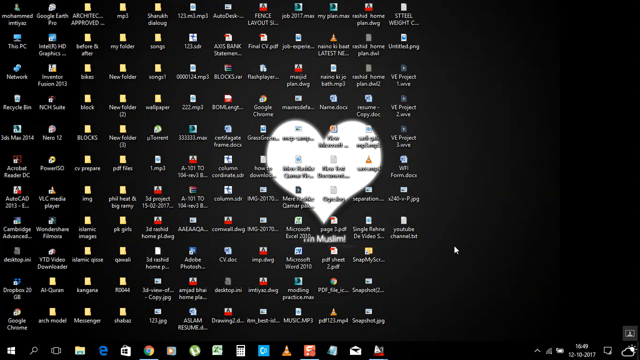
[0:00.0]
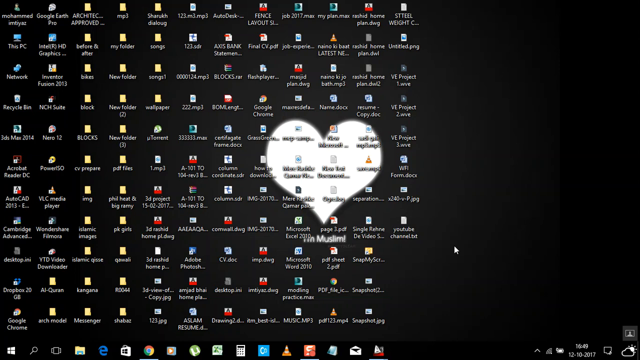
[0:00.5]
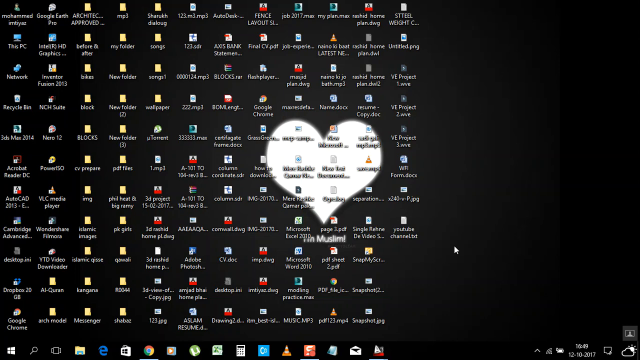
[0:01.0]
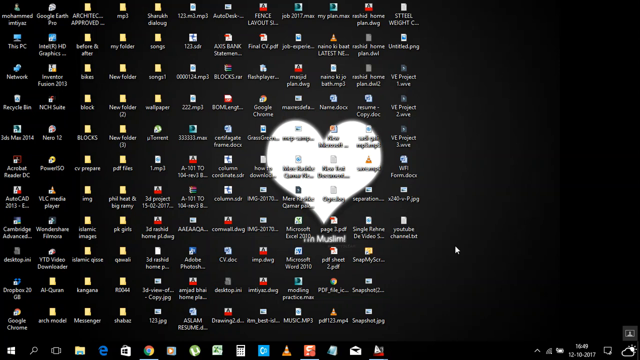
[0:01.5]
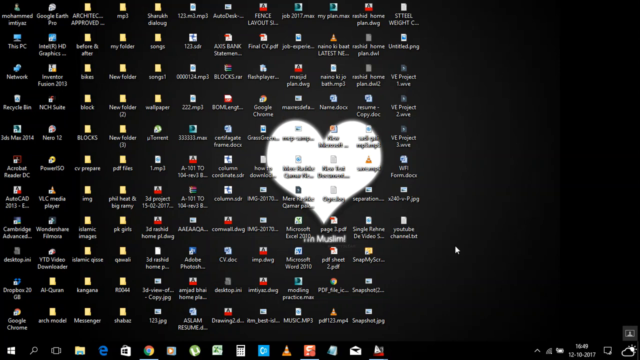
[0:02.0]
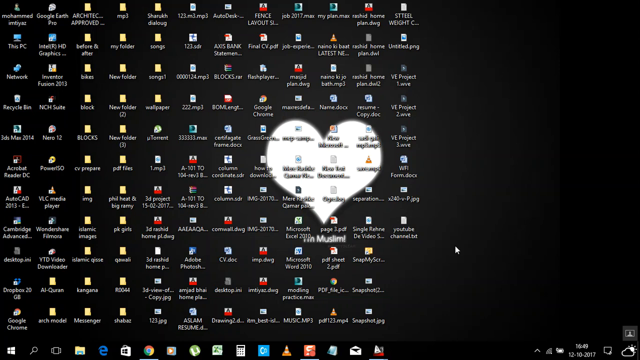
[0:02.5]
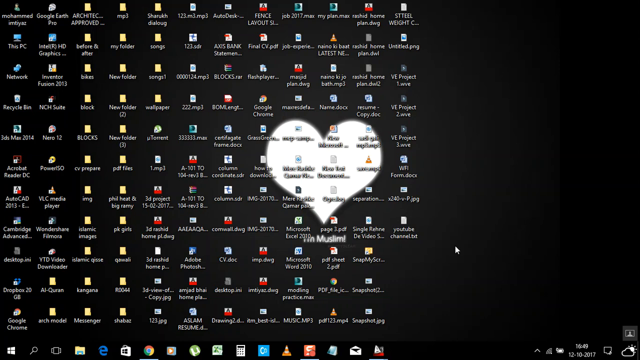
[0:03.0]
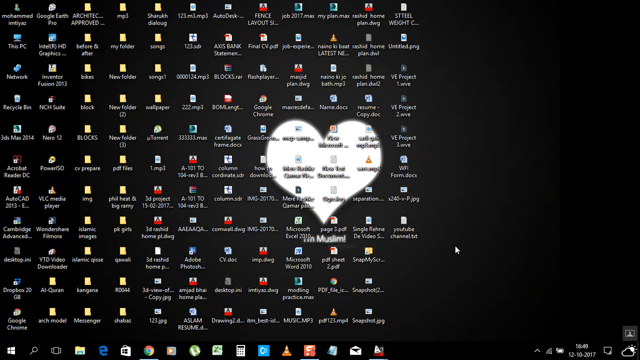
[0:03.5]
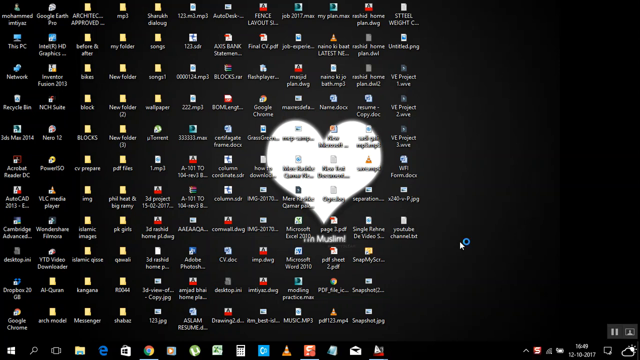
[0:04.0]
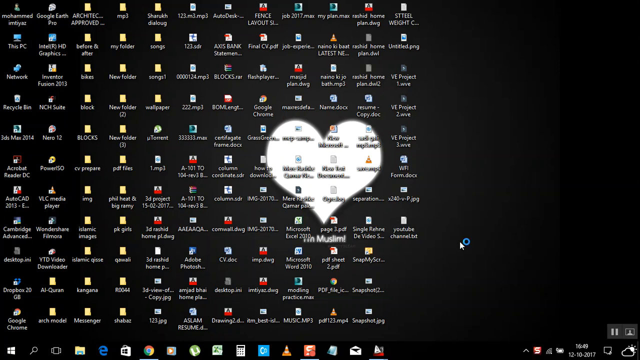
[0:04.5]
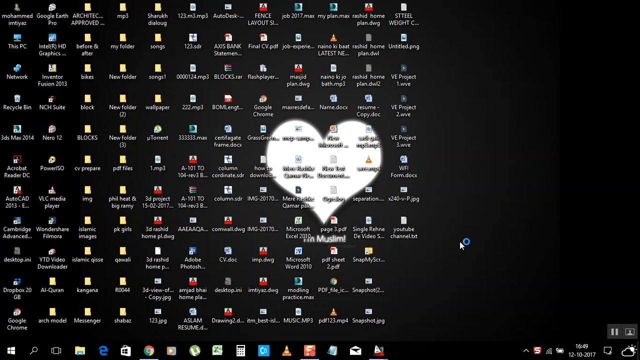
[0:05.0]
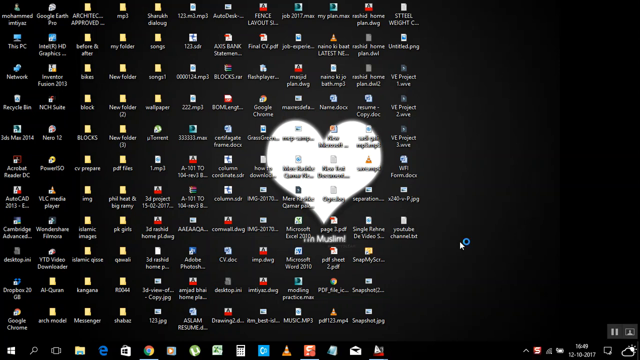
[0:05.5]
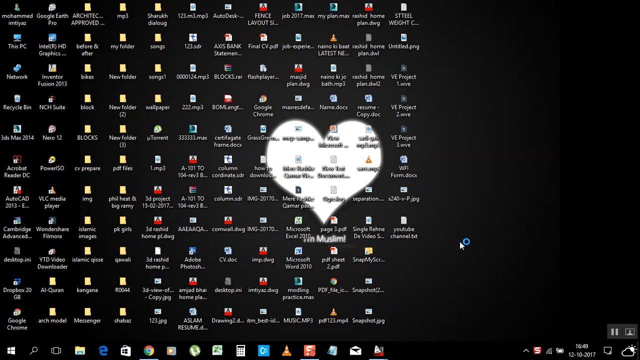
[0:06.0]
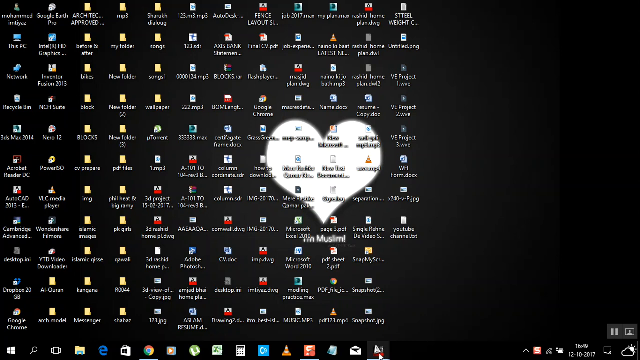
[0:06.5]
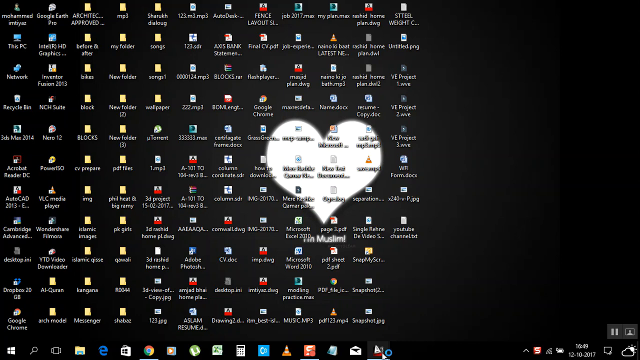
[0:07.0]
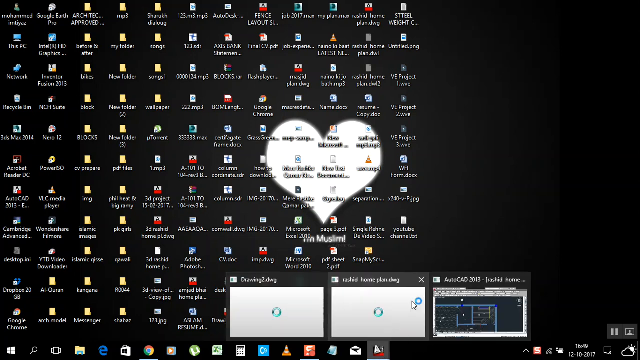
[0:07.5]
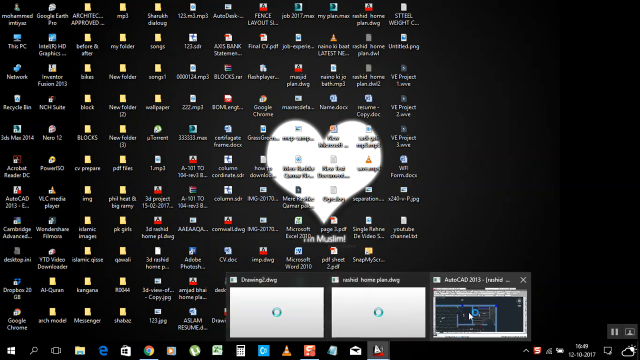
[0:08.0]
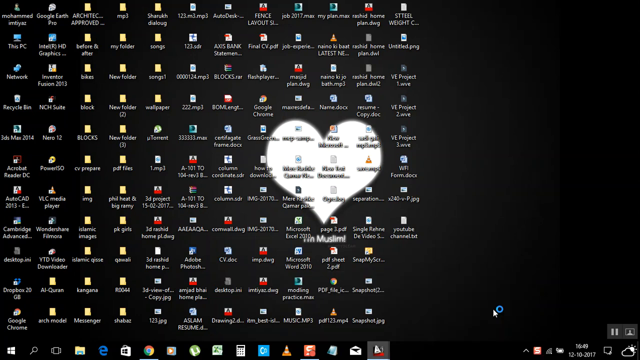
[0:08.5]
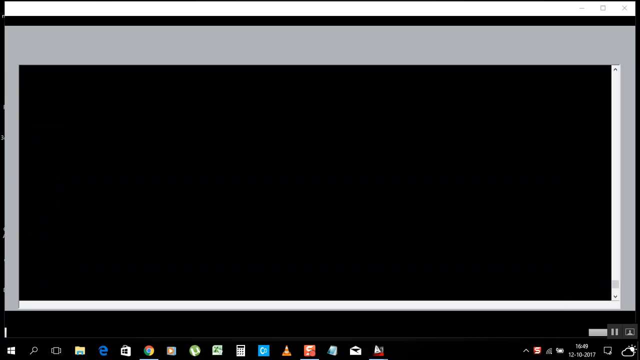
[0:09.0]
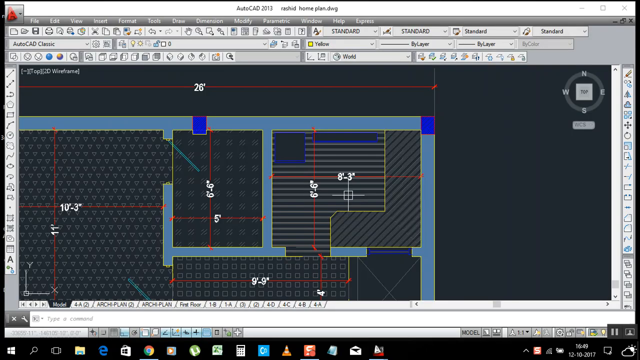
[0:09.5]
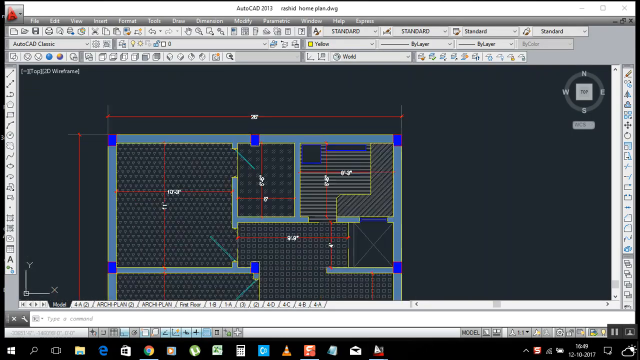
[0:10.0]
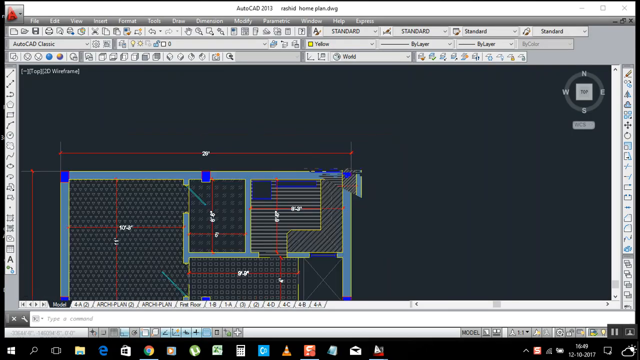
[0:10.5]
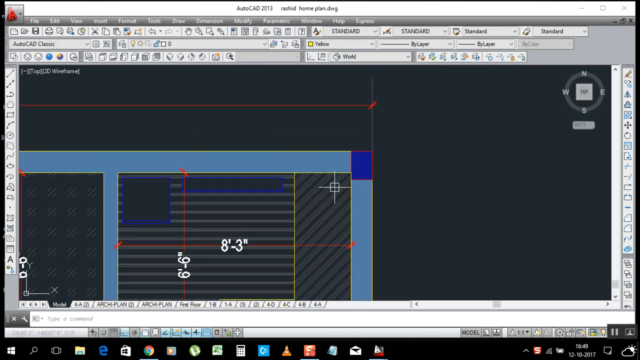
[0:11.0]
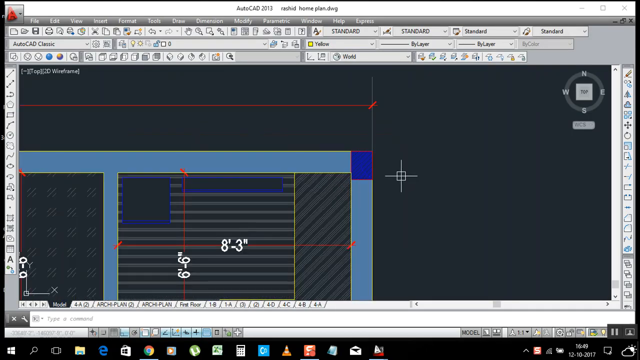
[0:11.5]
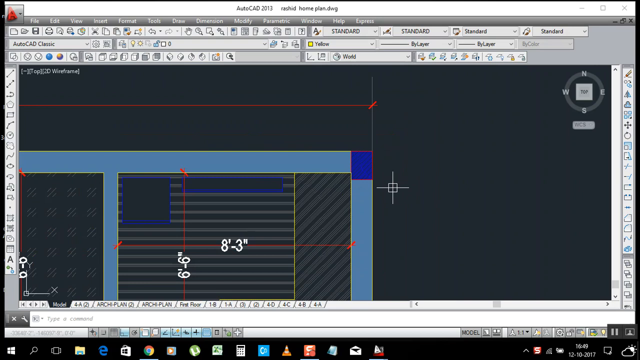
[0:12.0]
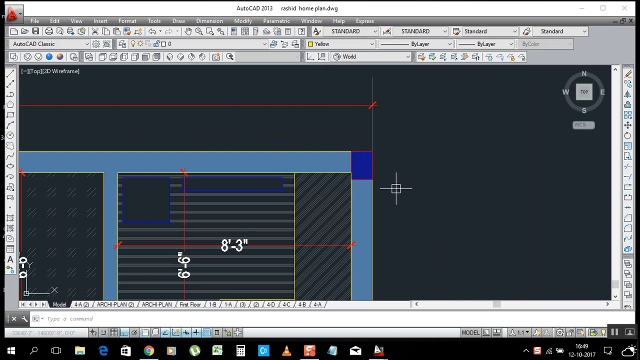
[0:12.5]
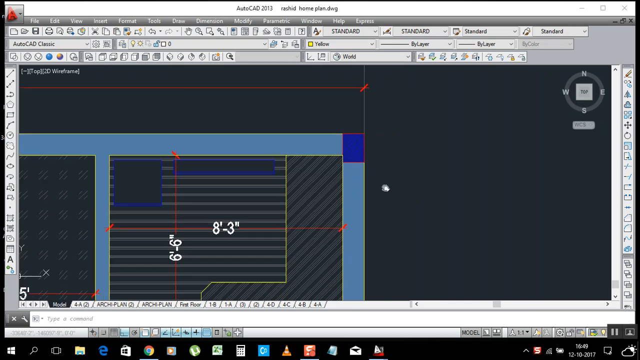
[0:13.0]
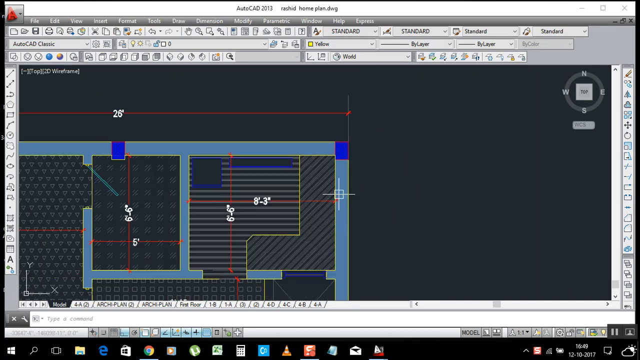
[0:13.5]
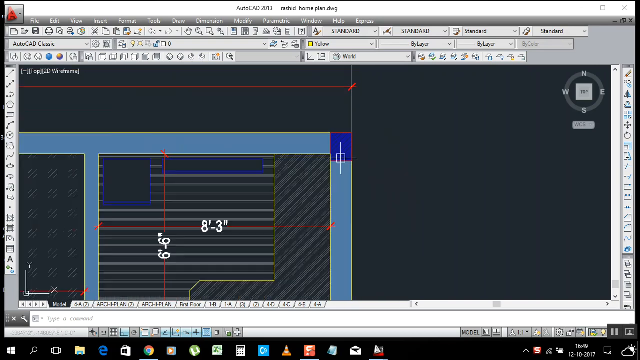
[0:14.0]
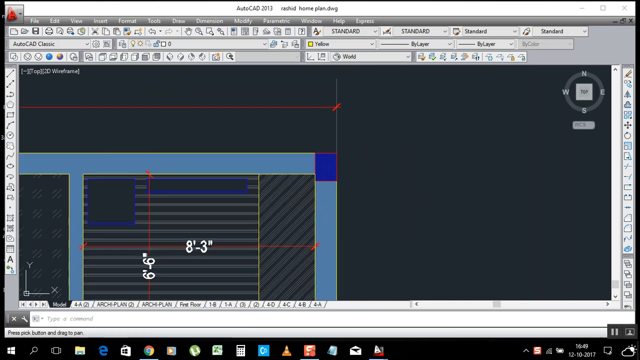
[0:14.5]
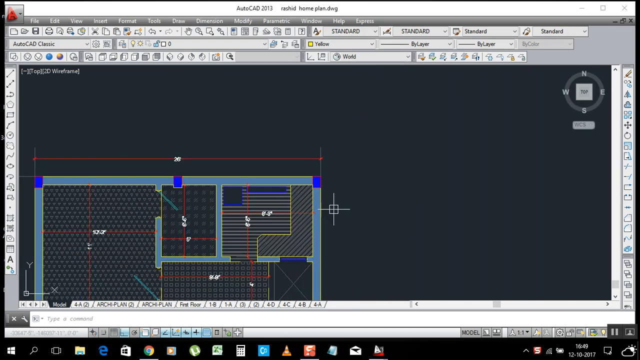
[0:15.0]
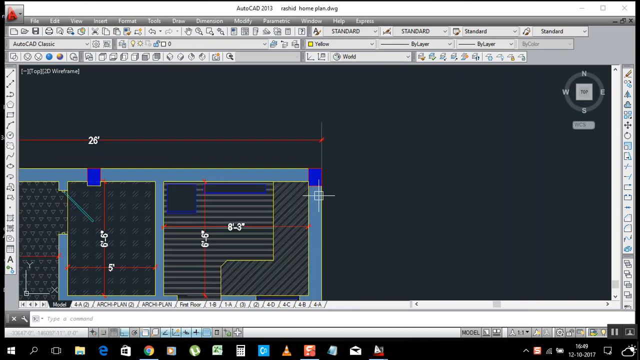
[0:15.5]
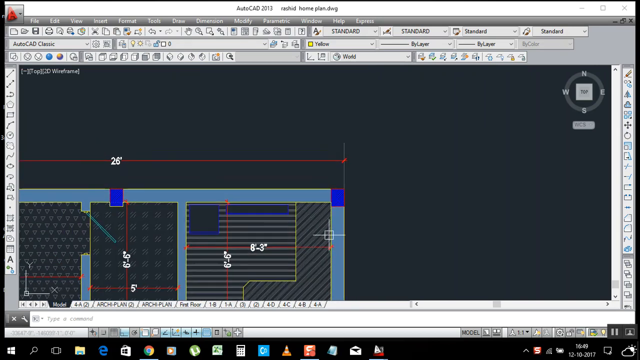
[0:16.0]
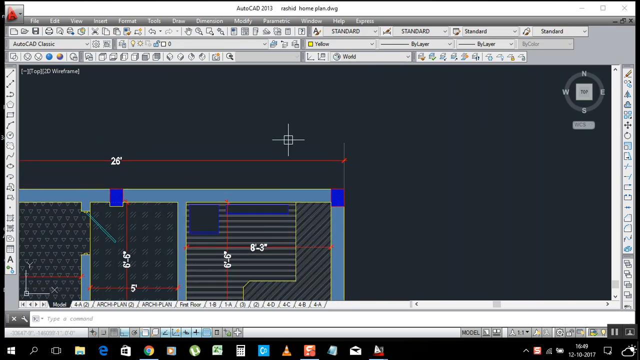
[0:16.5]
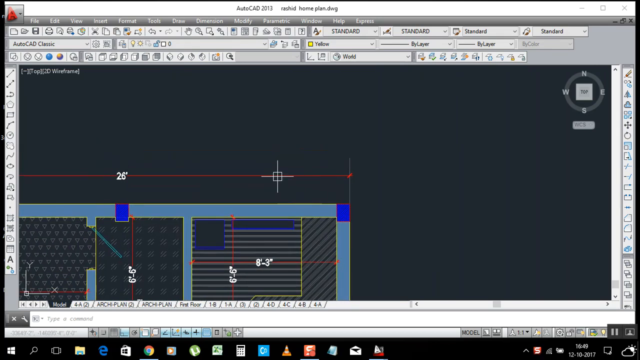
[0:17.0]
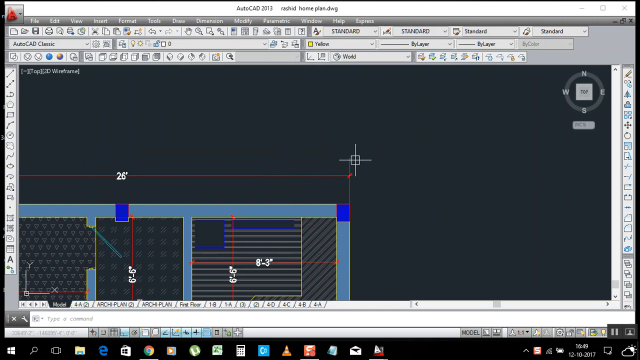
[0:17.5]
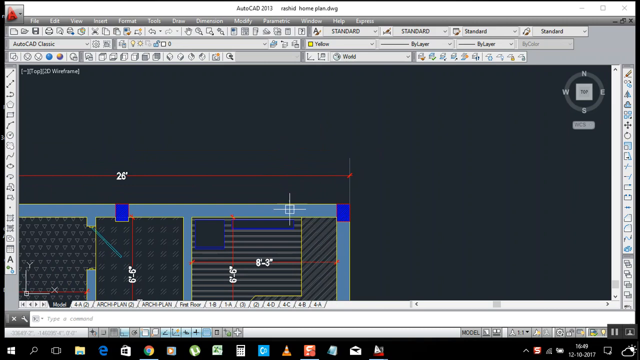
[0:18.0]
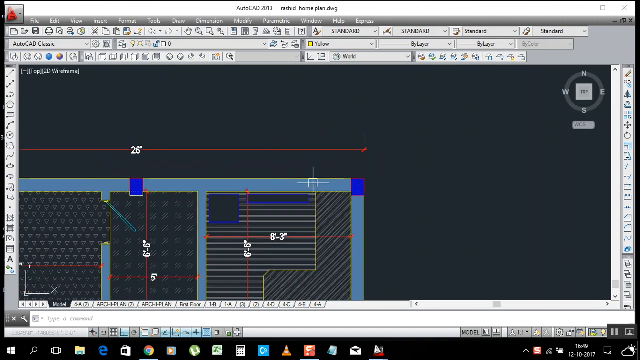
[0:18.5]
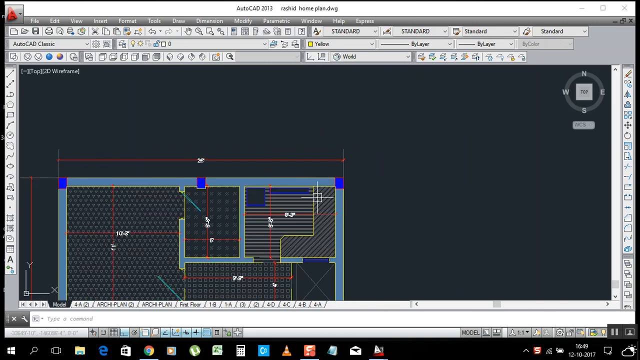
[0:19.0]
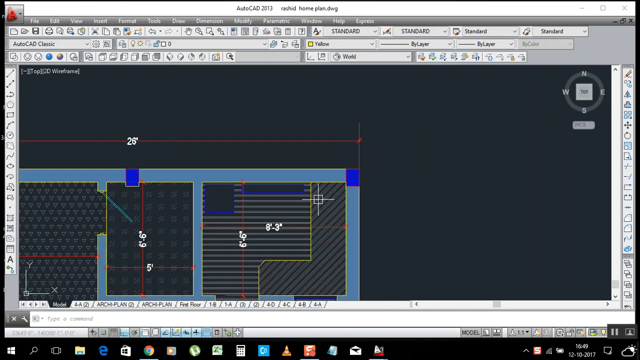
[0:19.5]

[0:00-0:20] The video begins on a Windows desktop that is extremely cluttered, with two-thirds of the screen covered in shortcut icons. The wallpaper is black with a white heart in the middle of the screen, surrounded by a faint glow. The traditional Windows taskbar is at the bottom. The mouse clicks one of the icons in the taskbar, which appears to be AutoCAD, and a window comes up that says "AutoCAD 2013". A CAD file opens, and the mouse pointer, a crosshair, is used to move around and zoom in and out of the drawing. The drawing looks like an architectural plan, a series of rooms and doorways, almost like a floor plan for a house or office building.